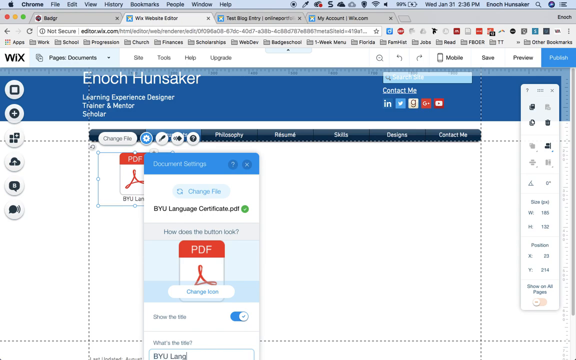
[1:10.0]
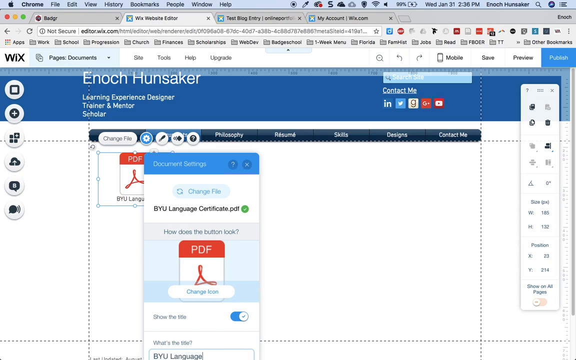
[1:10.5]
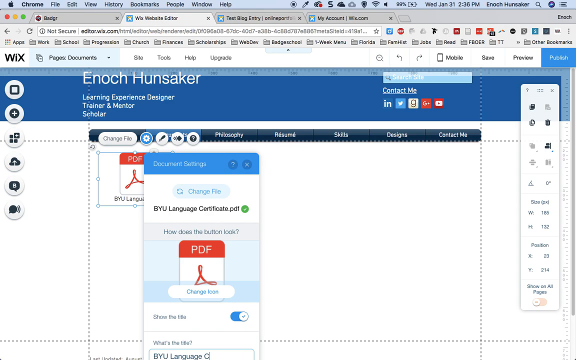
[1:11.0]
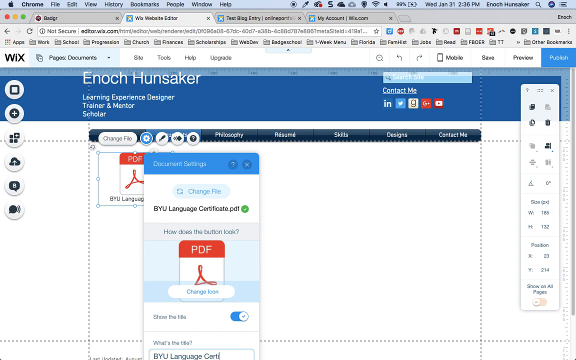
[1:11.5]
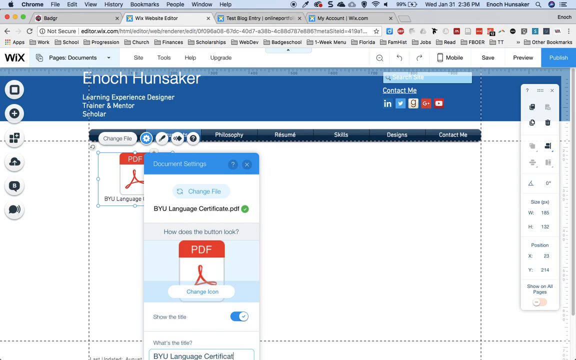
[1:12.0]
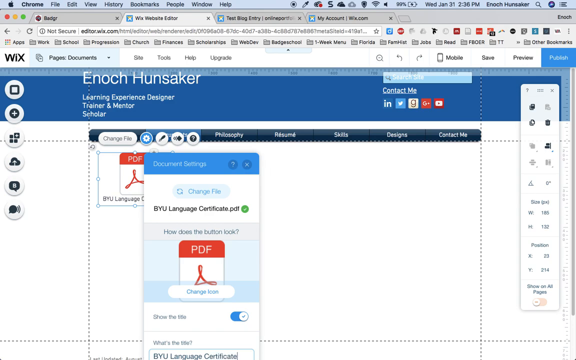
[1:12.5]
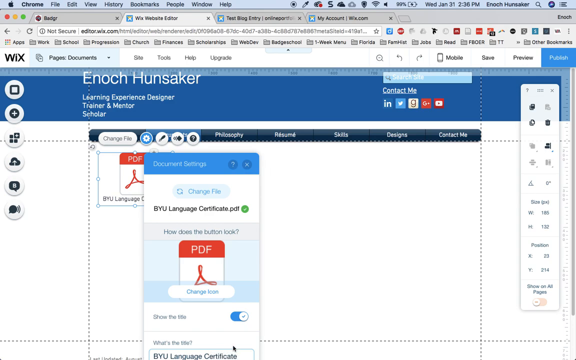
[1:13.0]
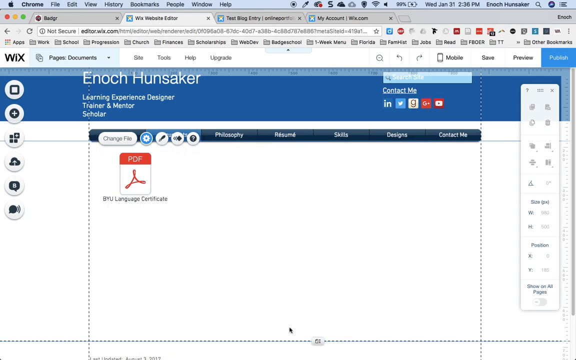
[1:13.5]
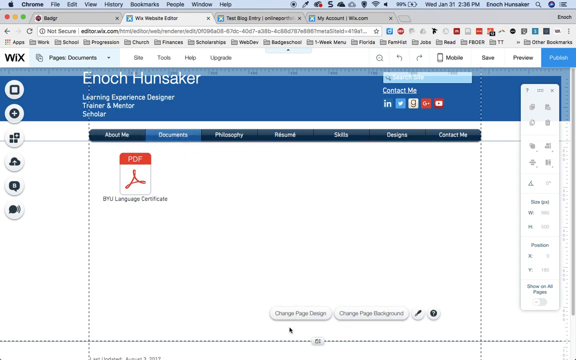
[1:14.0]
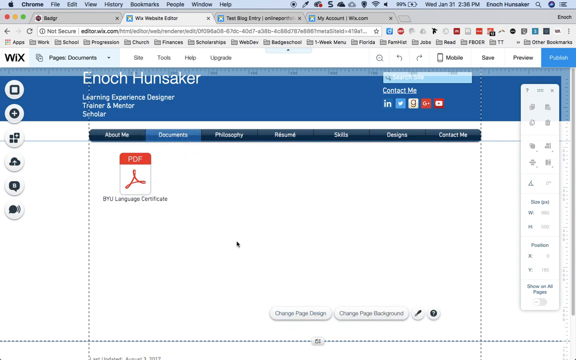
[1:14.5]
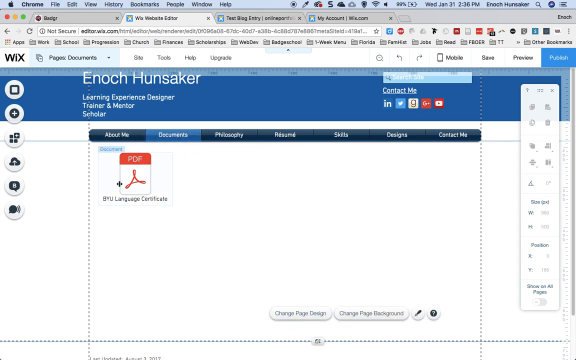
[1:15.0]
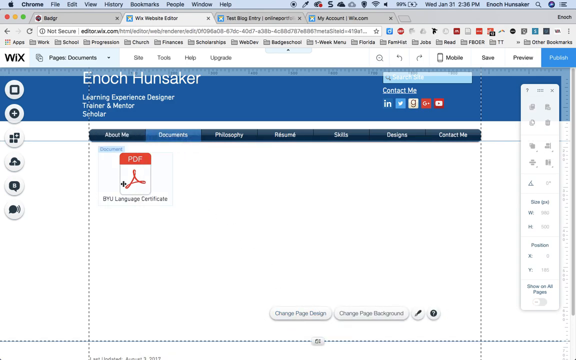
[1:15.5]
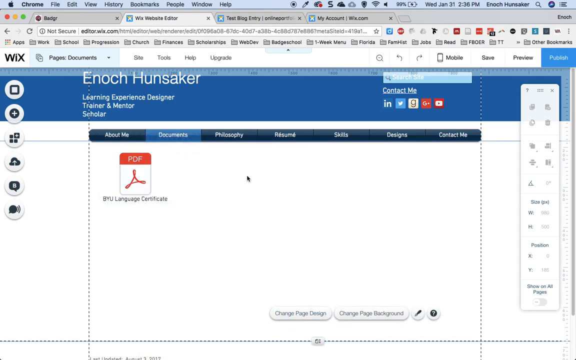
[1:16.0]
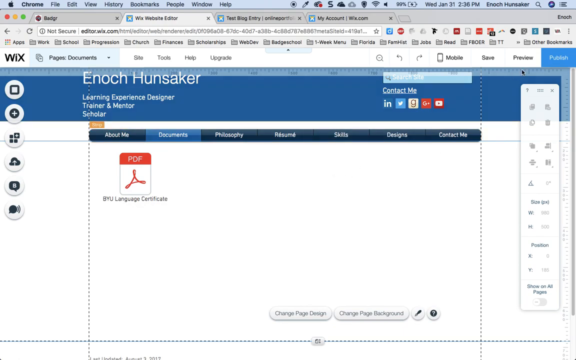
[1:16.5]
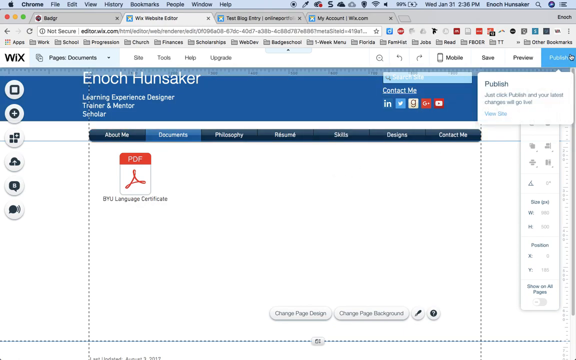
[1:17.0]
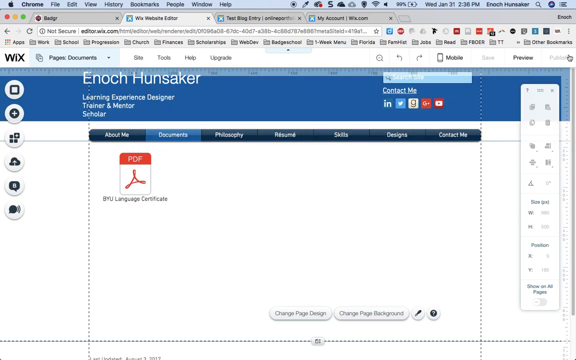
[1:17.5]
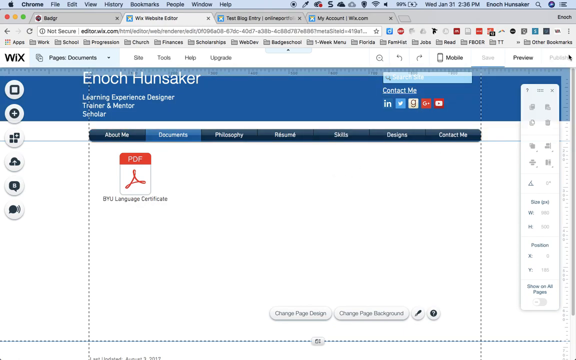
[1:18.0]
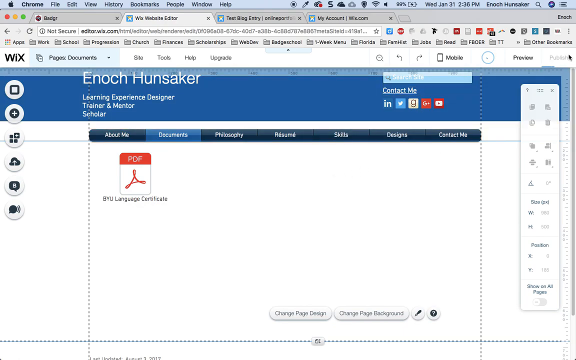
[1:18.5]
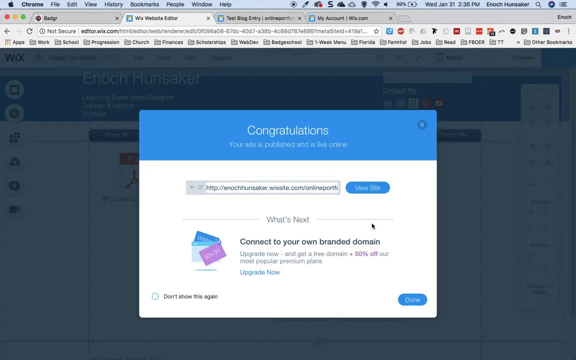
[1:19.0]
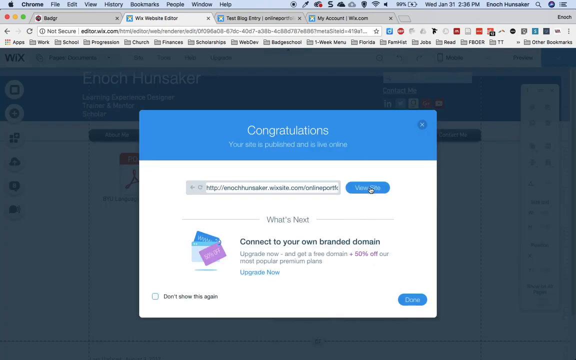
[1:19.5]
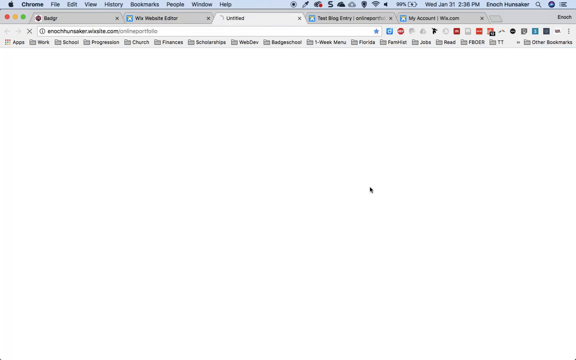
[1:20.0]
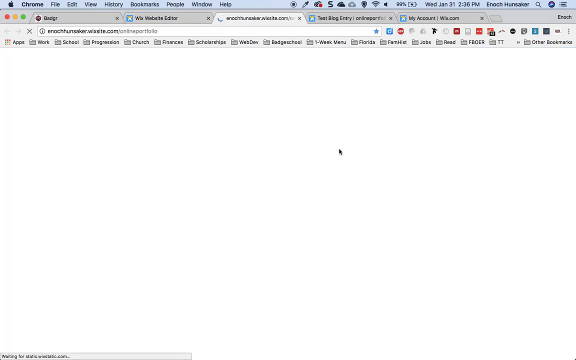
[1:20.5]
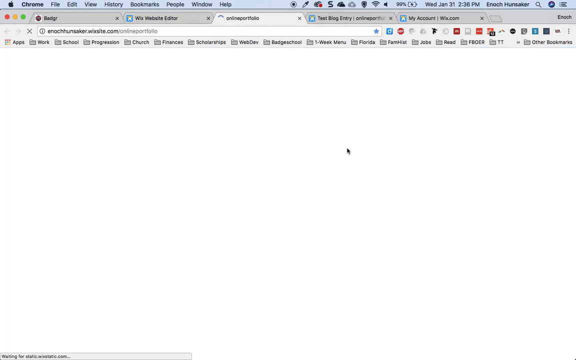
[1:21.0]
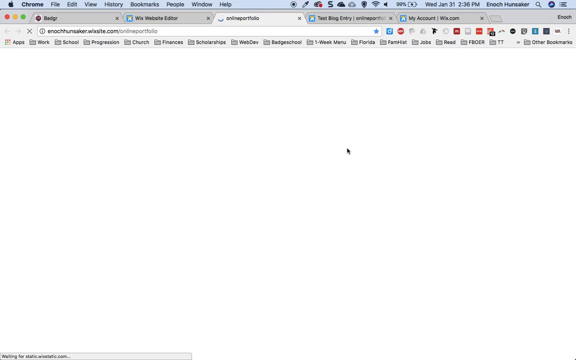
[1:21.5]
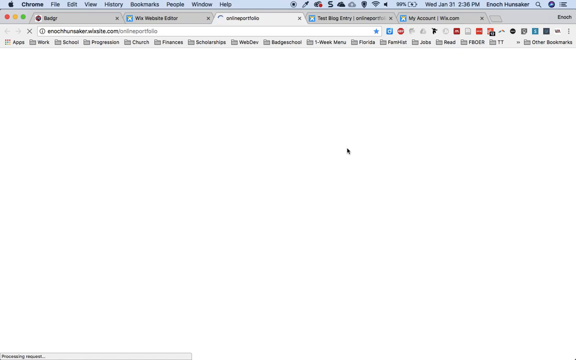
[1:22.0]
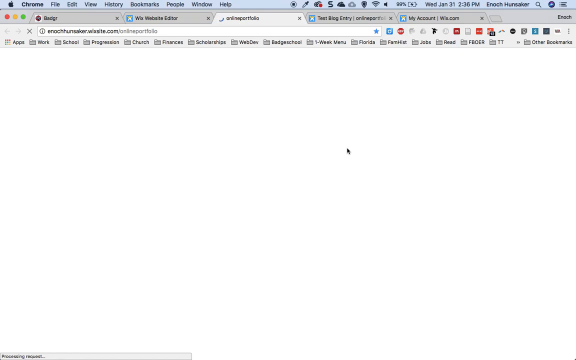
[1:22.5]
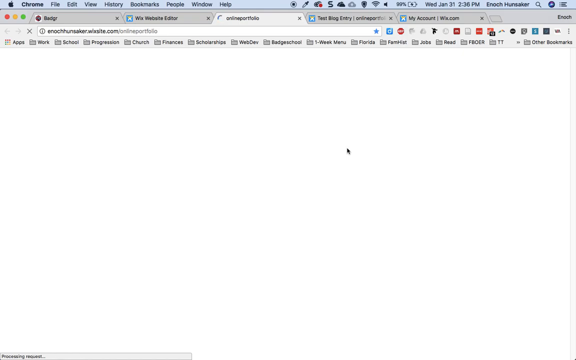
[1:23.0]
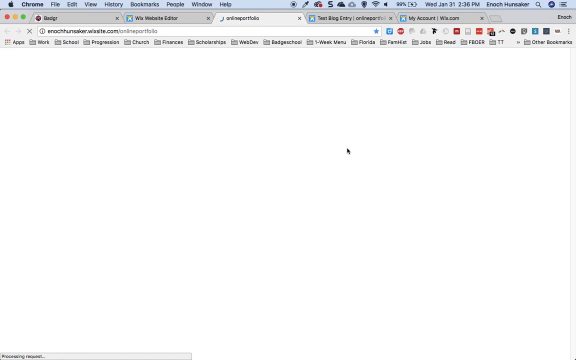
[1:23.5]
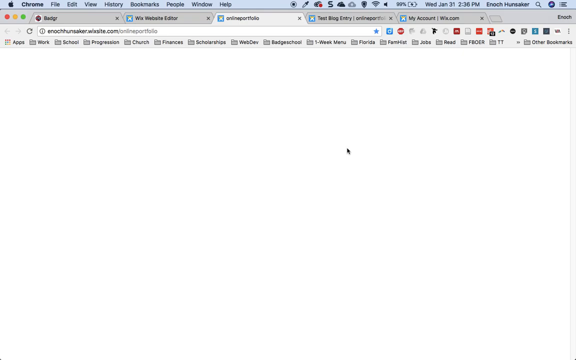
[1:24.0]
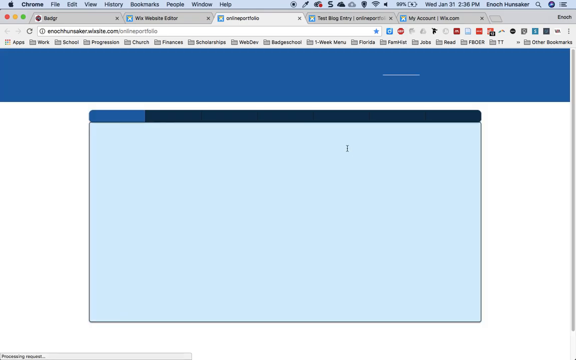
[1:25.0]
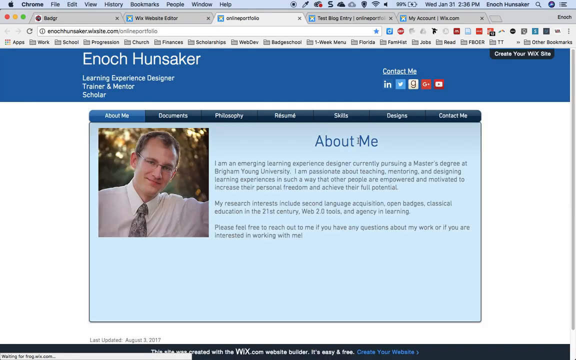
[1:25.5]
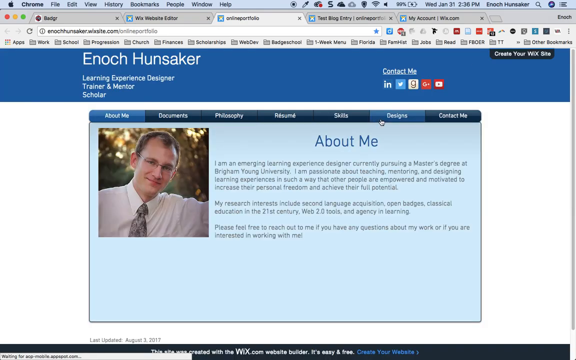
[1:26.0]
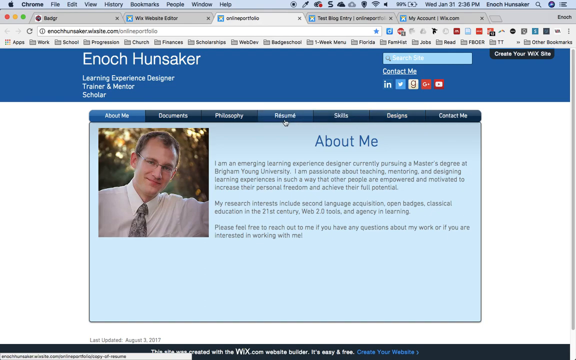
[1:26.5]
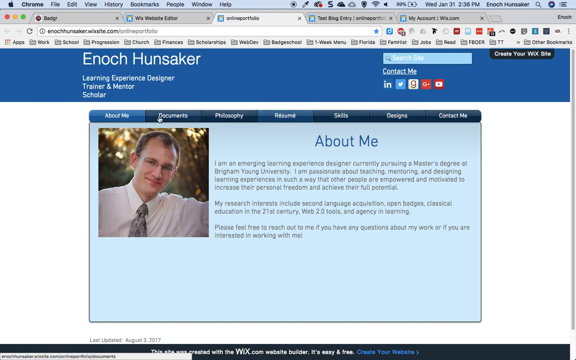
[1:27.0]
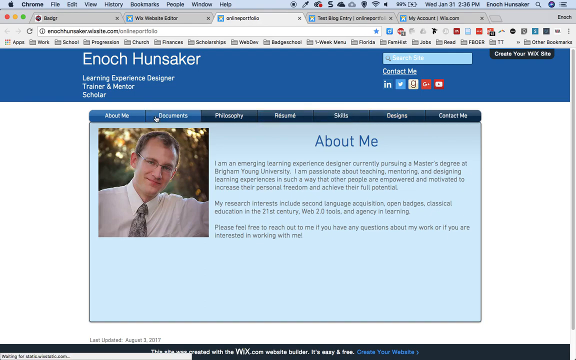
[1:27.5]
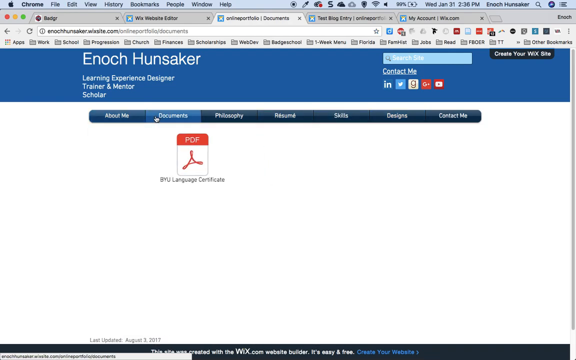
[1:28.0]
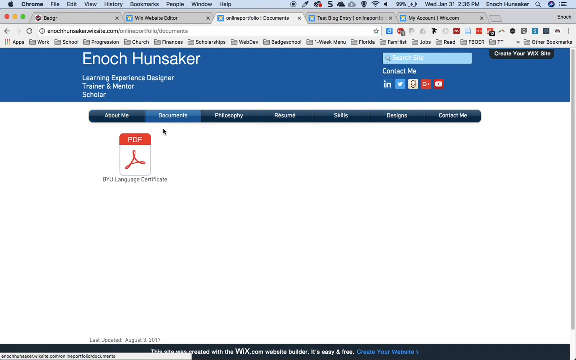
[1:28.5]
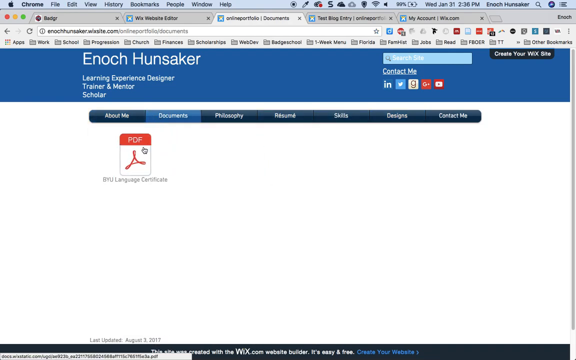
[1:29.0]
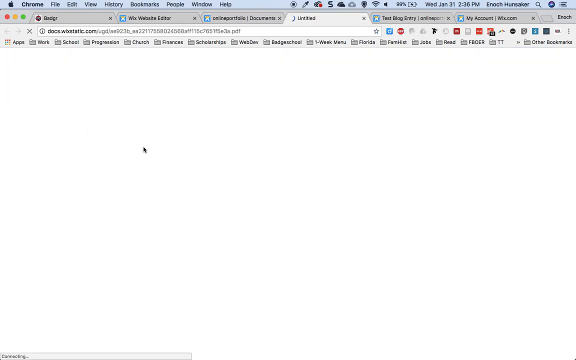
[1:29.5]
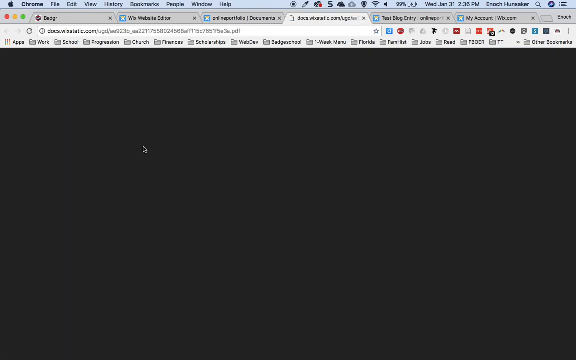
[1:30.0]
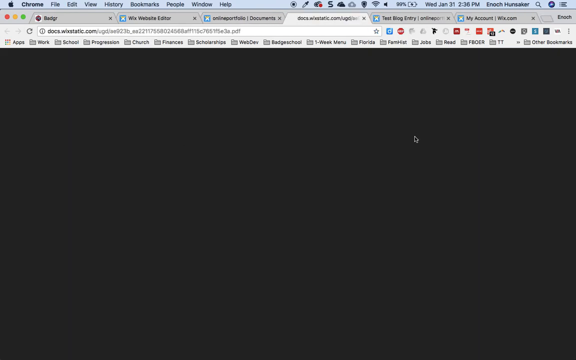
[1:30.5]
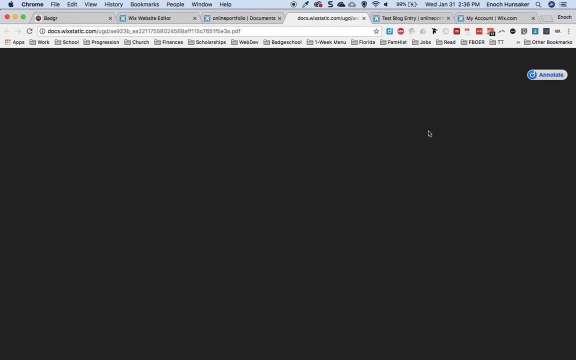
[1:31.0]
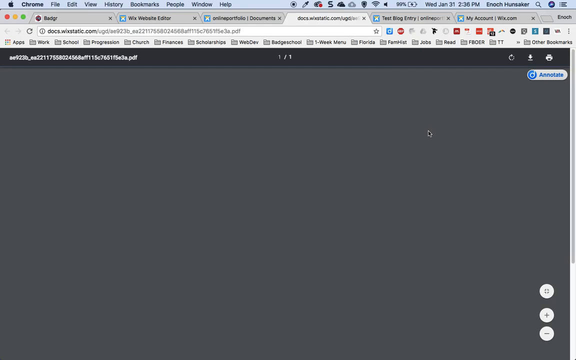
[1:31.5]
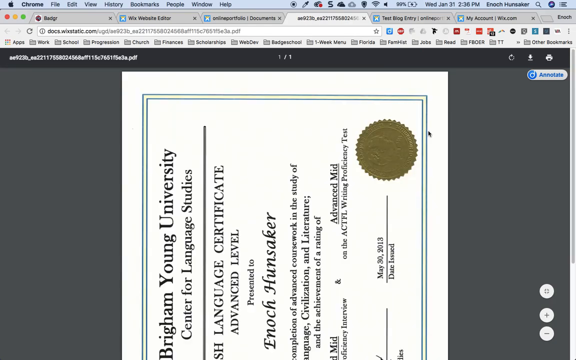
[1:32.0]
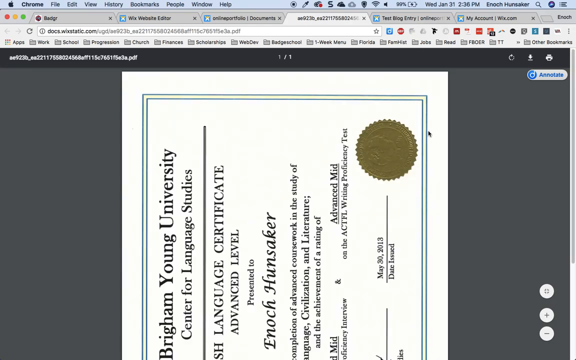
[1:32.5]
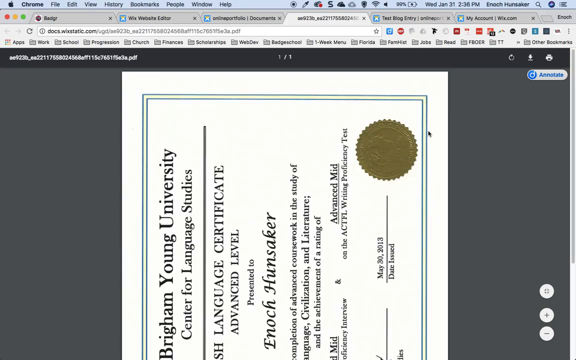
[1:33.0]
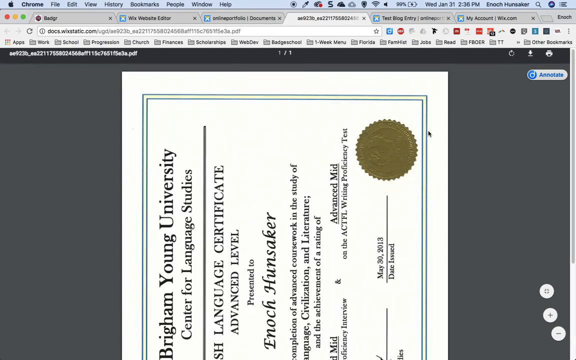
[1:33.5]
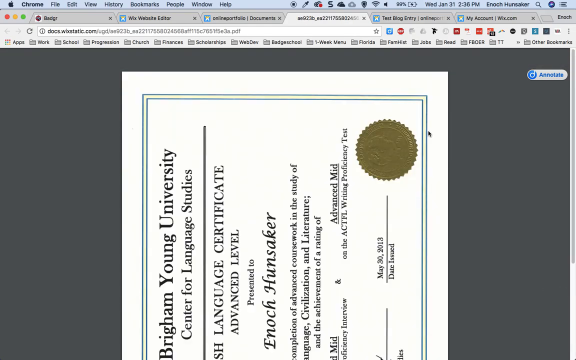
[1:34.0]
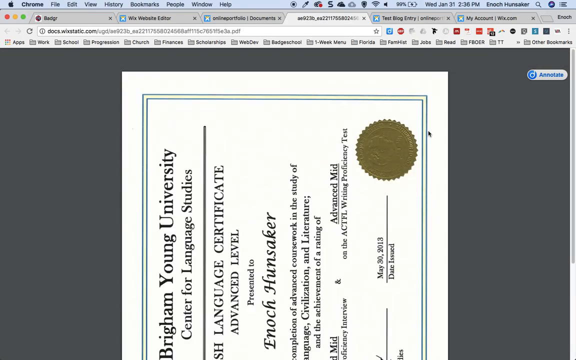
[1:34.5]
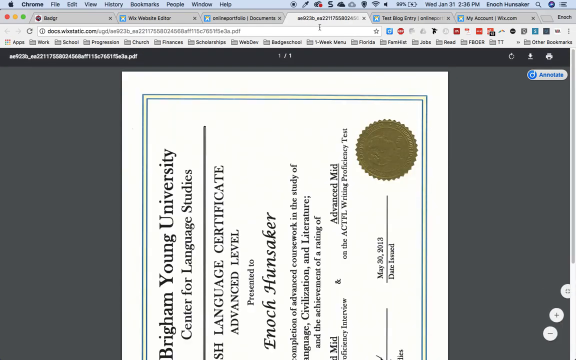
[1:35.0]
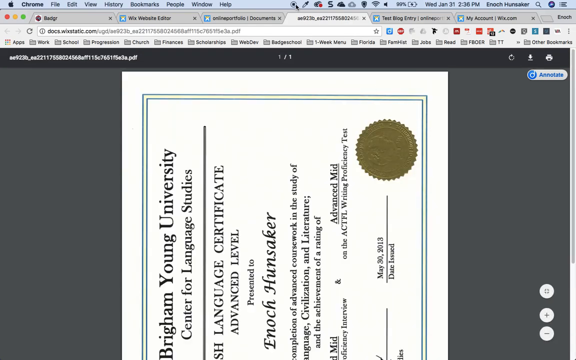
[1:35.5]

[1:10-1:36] An open window on the computer screen has a blue background at the top that says "document settings". Below that it says "change file", and below that "BYU language certificate.pdf", with a green circle containing a white checkmark to the right of the PDF. Below that it says "how does the button look". Below that is a PDF item at the top, with "PDF" in white letters, and below that a white background with the Adobe symbol on it. Below that it says "change icon". On the left side of this, and behind it, is the same PDF image. Below that, the person is labeling an image; the label begins "BYU" but is partly hidden behind the other window, and it reads "BYU languages certificate". The window in front then disappears. The mouse goes up to the top and clicks on publish, and a congratulations screen appears. A white screen follows, with the tab at the top buffering, and then a picture of a man in a white shirt appears. A new tab apparently opens, showing a black screen with a certificate on it that is vertical rather than horizontal, so all the words on it are vertical.